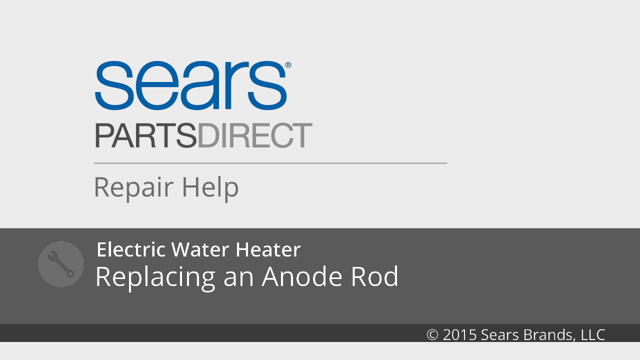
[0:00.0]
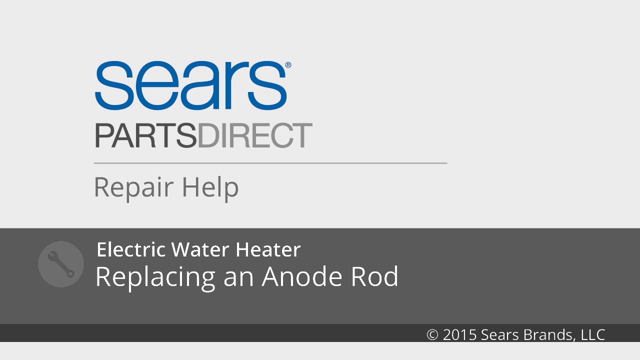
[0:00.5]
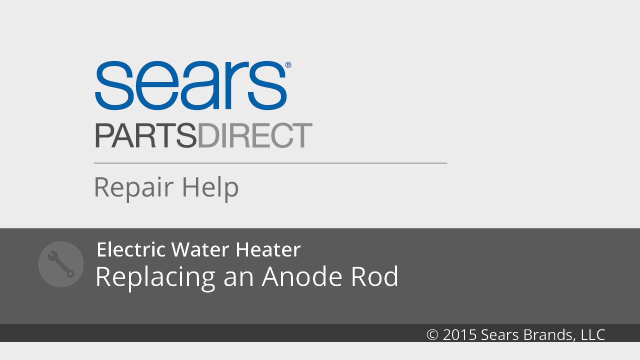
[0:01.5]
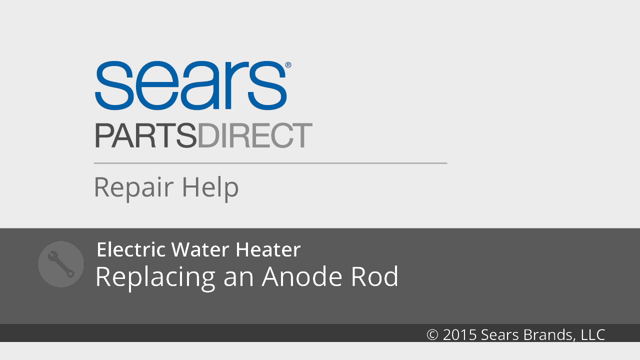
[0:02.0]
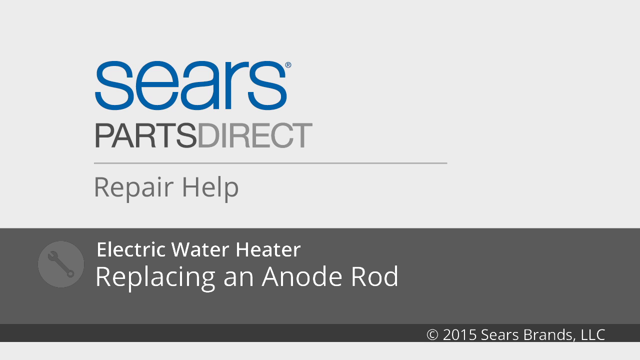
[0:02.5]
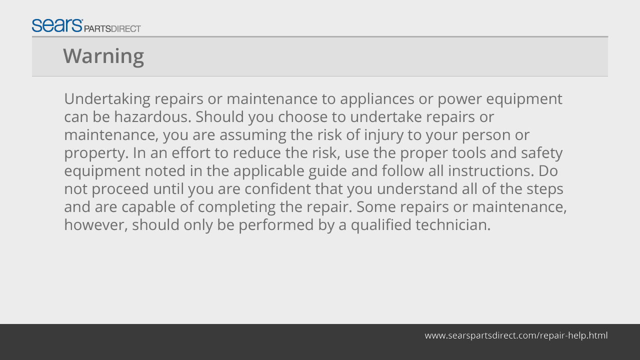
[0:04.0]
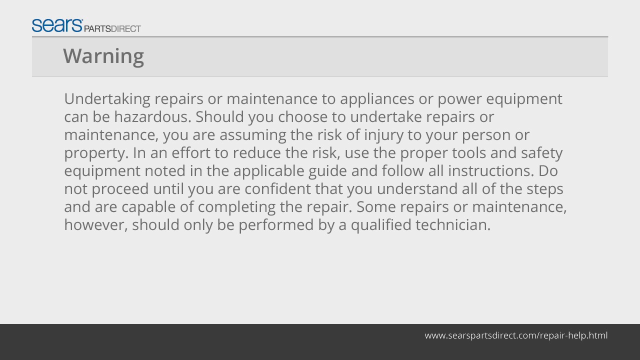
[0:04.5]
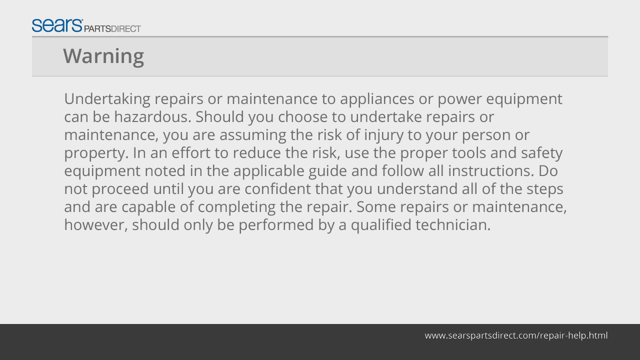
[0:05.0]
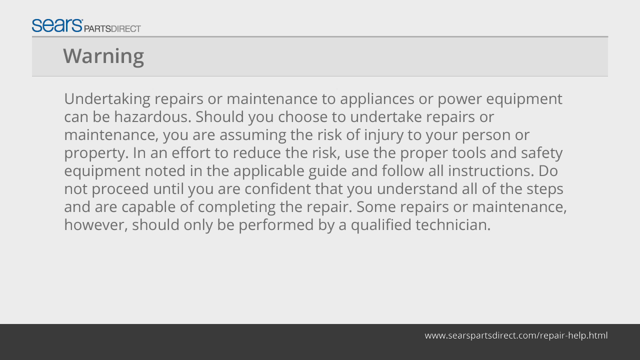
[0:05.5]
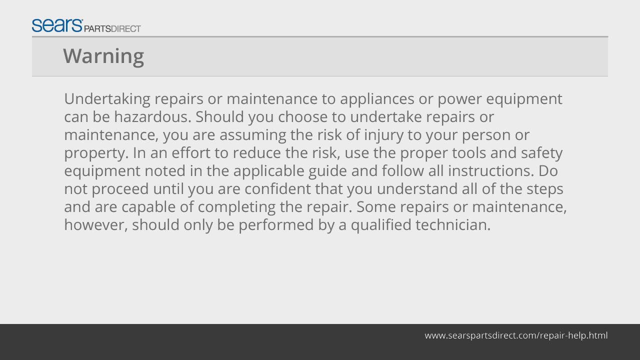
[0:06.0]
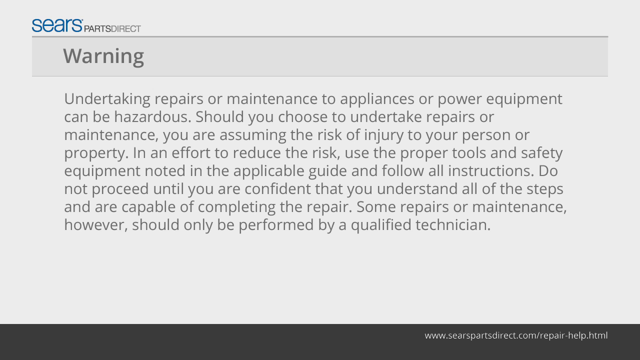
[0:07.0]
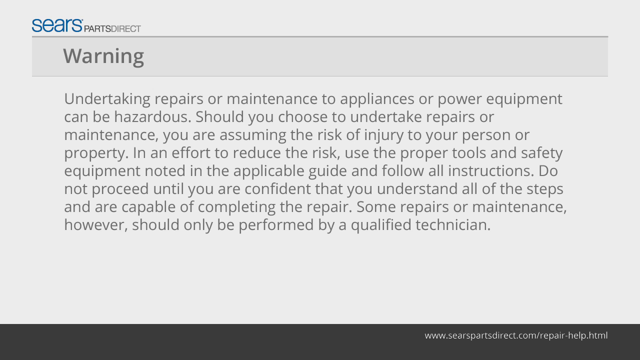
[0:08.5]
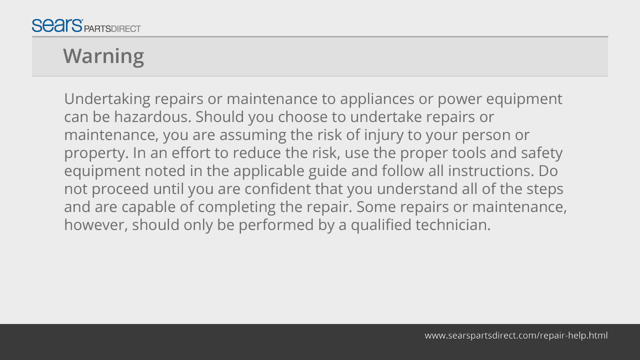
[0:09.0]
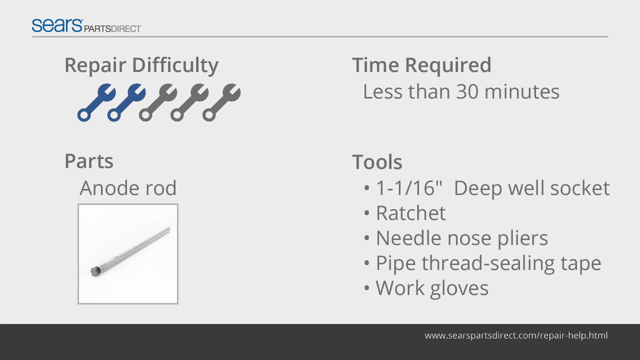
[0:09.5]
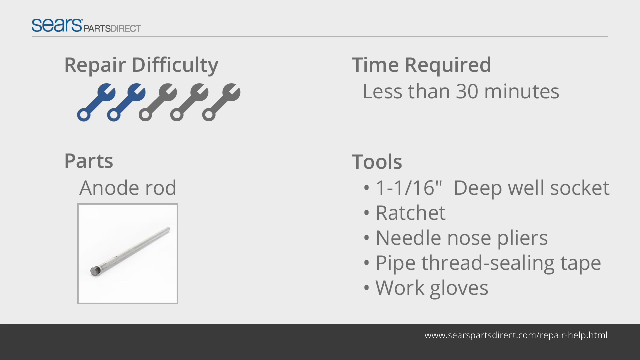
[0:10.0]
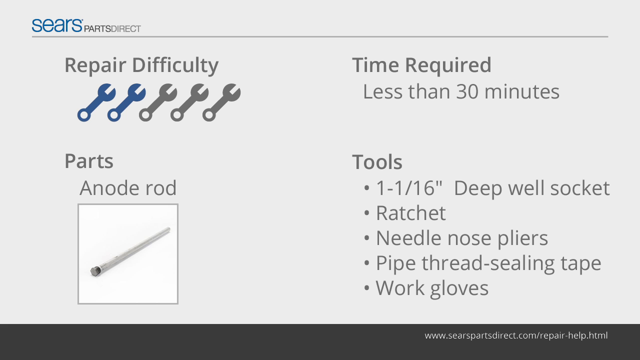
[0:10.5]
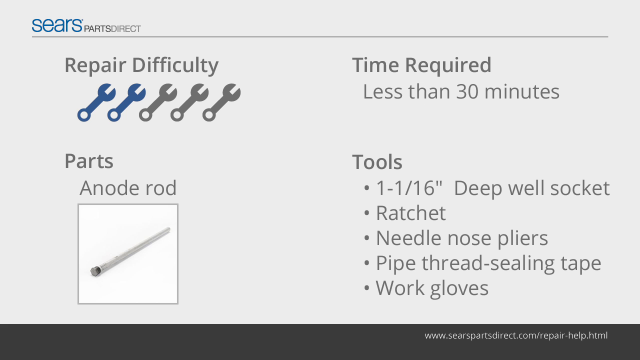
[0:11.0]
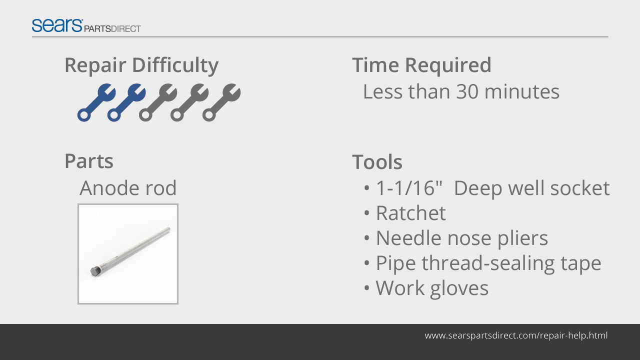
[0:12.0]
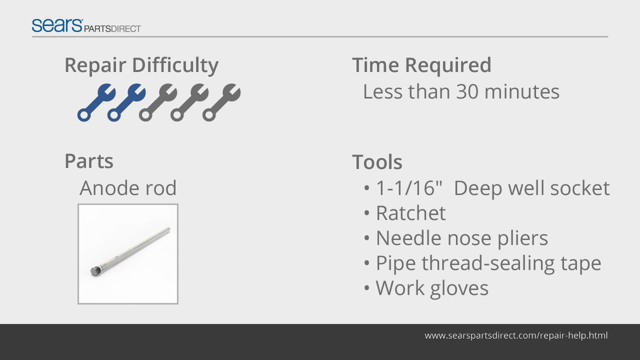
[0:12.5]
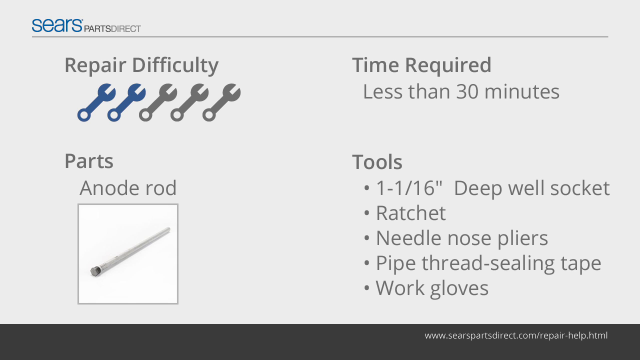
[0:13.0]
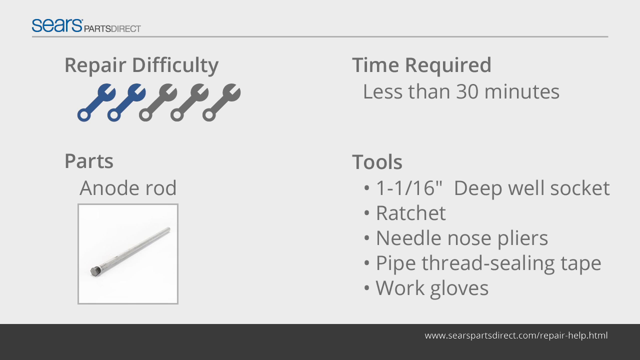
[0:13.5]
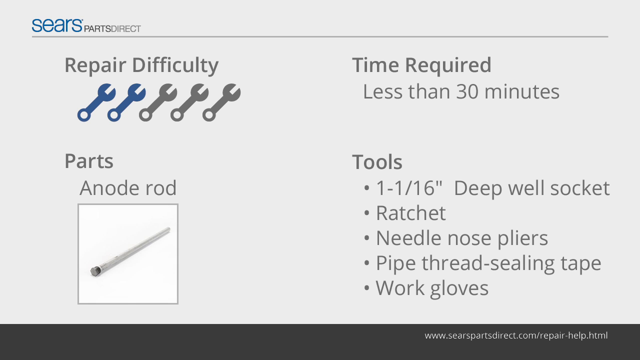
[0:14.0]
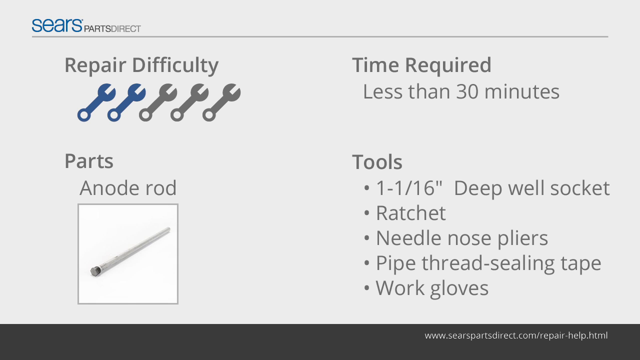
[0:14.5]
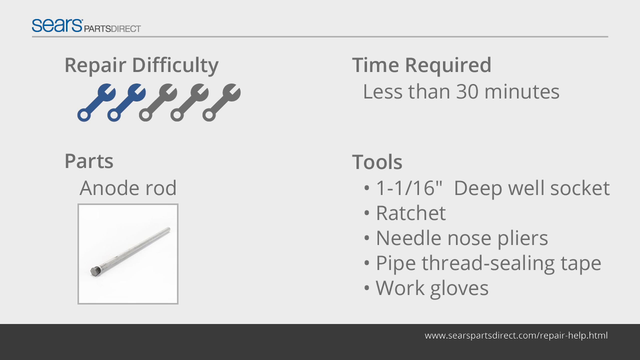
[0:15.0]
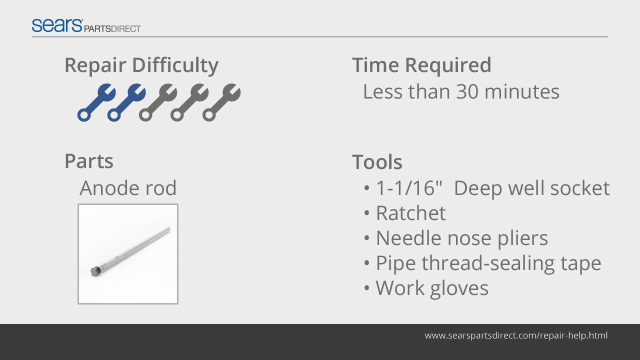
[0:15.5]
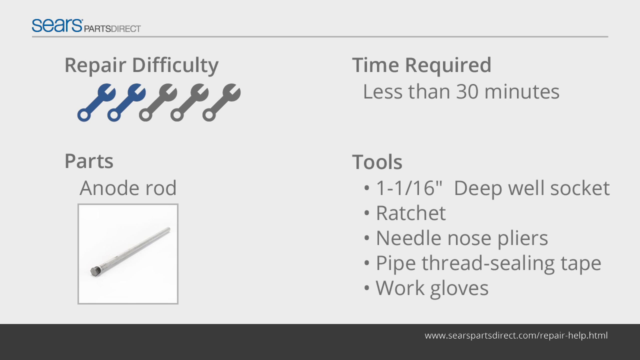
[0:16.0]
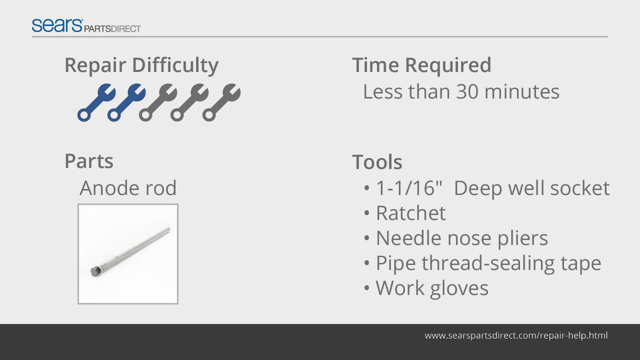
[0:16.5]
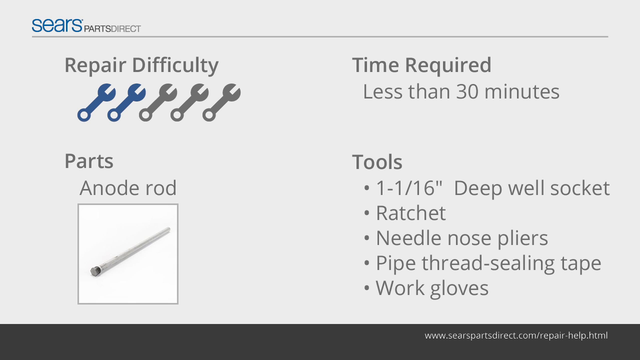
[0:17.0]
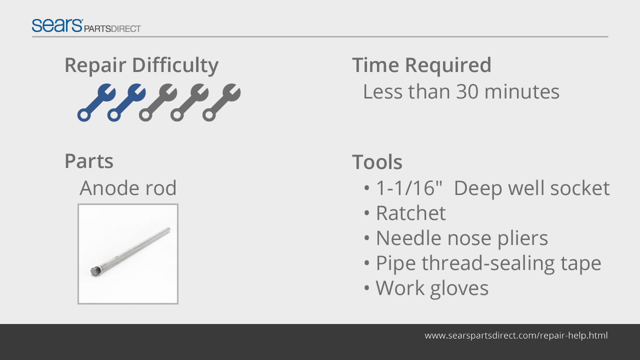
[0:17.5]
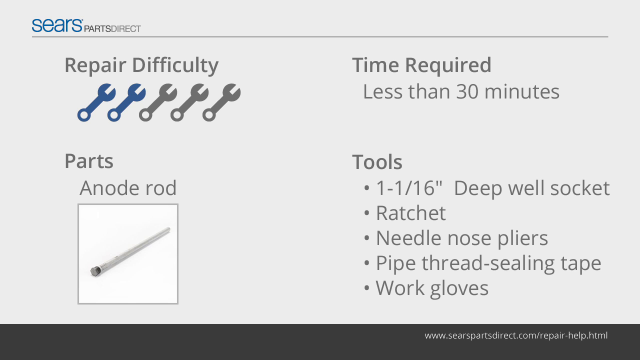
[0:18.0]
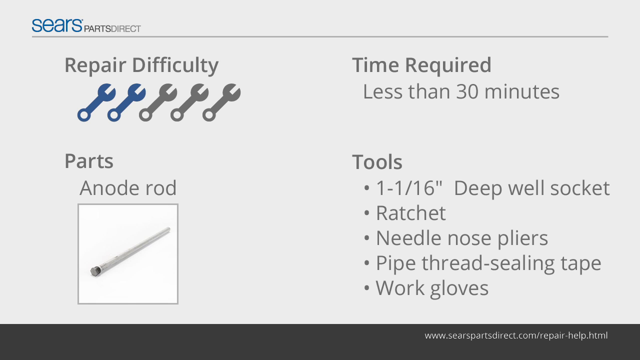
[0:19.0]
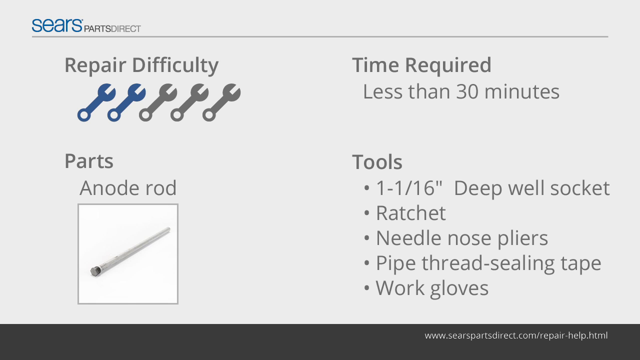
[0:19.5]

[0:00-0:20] This is a Sears step-by-step guide on replacing an anodized rod. The opening screen has two different background colours, with a very light background at the top. It says "Sears" in blue, in an unusual font that stands out from the other text. Underneath Sears is "Parts Direct", all in gray, with "Parts" more bolded and "Direct" in a lighter gray. Below that is a line, and under the line it says "Repair help". Below "Repair help" is a bold, deep gray line. To the side is a wrench in a circle, and the text reads "Electric water heater replacing an anodized rod". A warning then appears, apparently cautioning viewers to be careful and follow the directions, and to have someone else do the repair if they are not comfortable. Next comes an all-gray screen that says "Sears Parts Direct" and shows the repair difficulty as two wrenches, apparently meaning mildly difficult. It says the repair could take less than 30 minutes. It lists the part, an anodized rod, with a picture of a long, skinny tube, and lists the tools needed: a wall socket, pliers, pipe threading tape and work gloves.